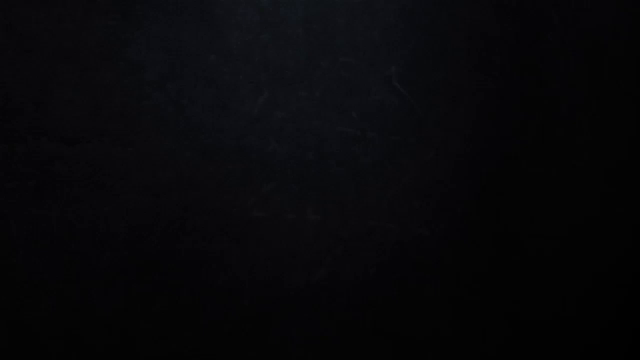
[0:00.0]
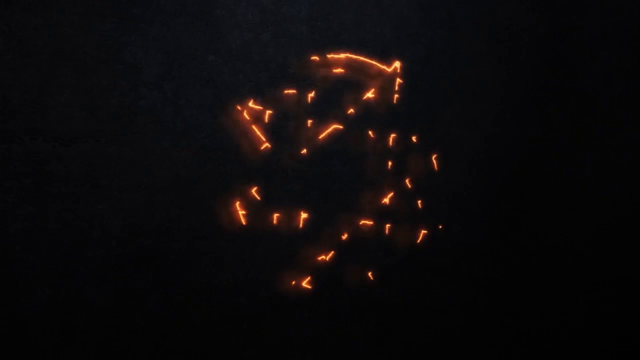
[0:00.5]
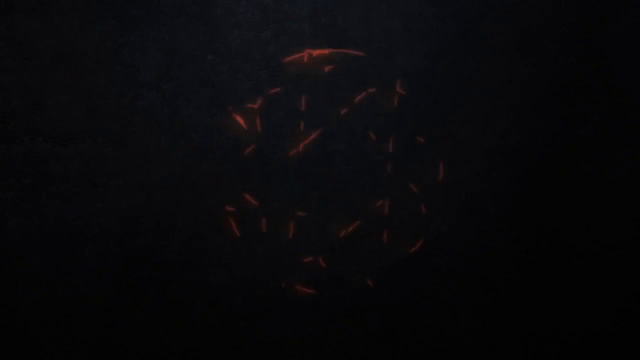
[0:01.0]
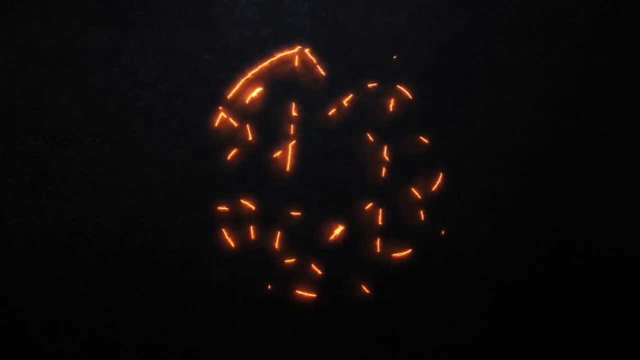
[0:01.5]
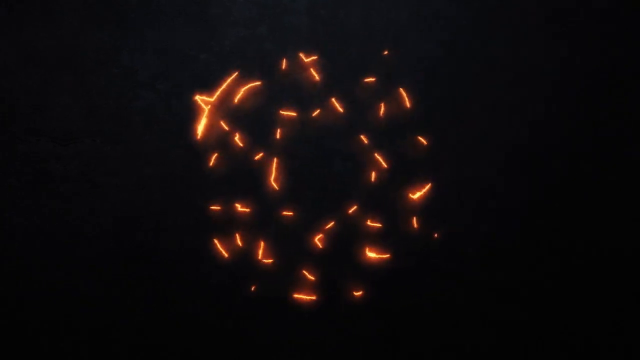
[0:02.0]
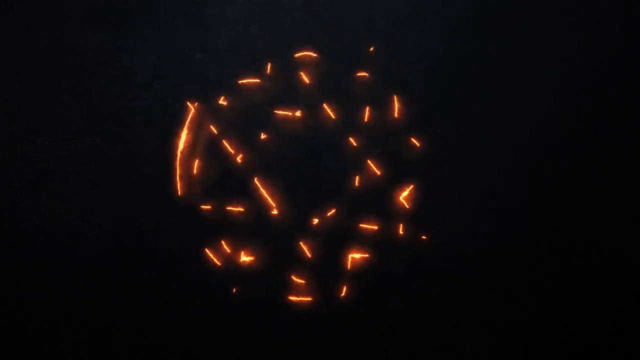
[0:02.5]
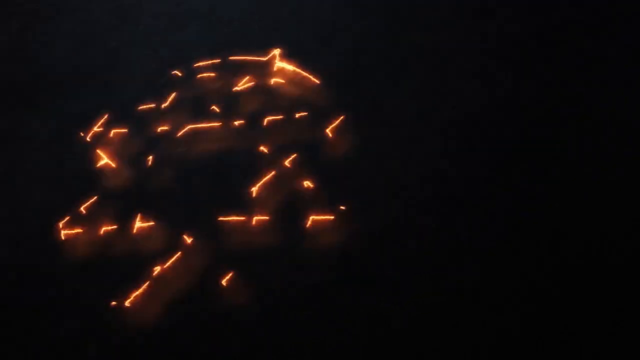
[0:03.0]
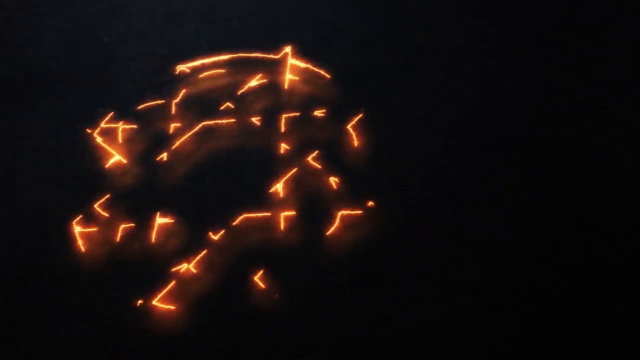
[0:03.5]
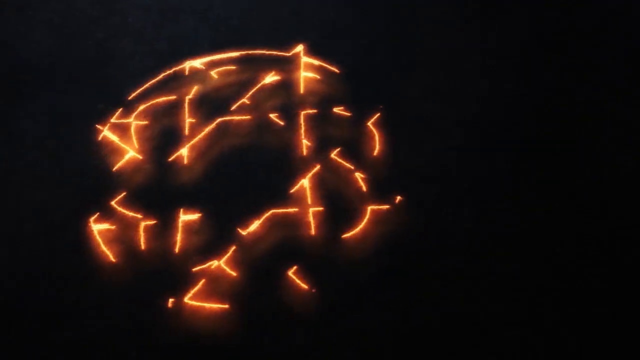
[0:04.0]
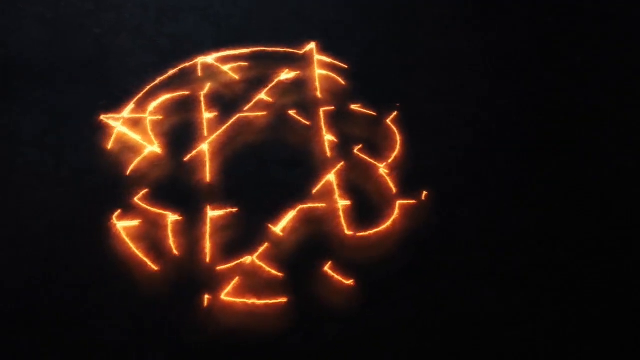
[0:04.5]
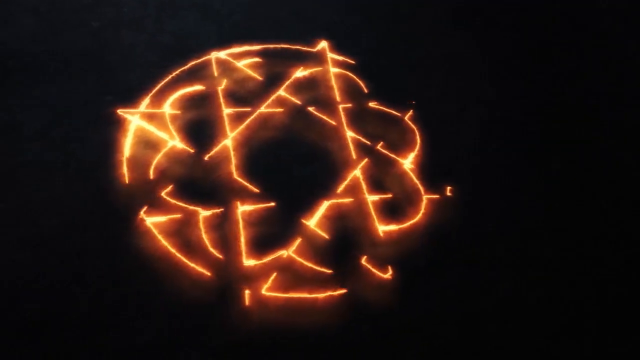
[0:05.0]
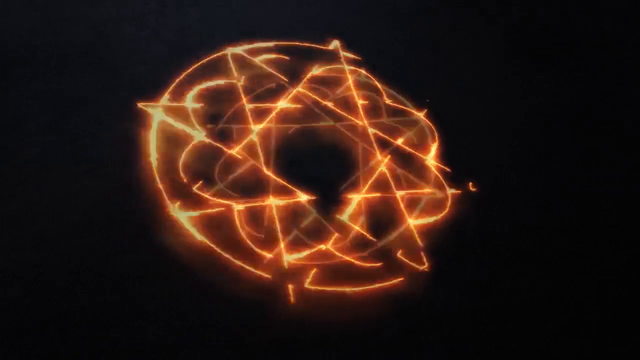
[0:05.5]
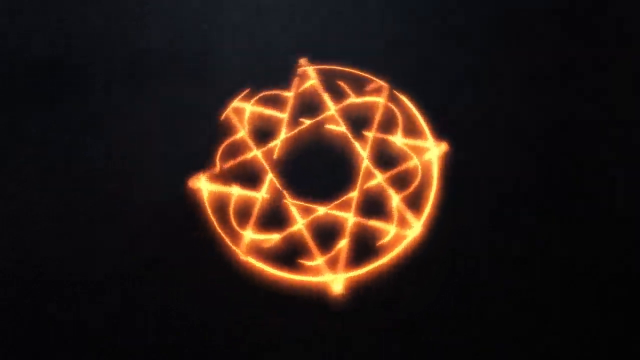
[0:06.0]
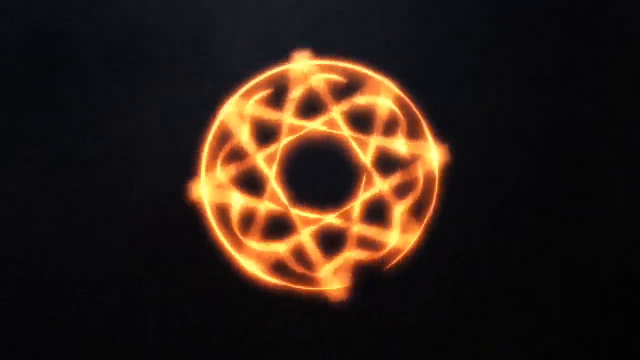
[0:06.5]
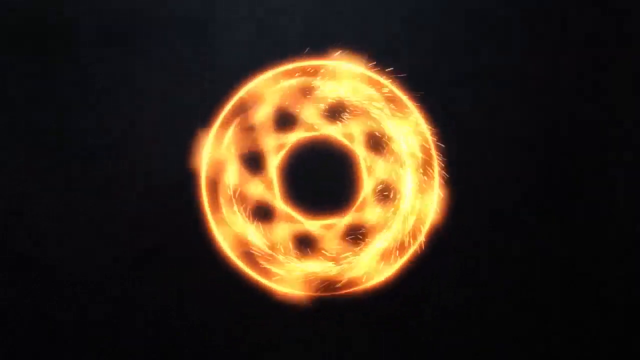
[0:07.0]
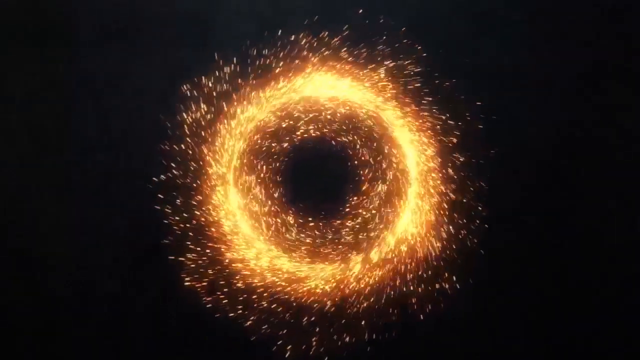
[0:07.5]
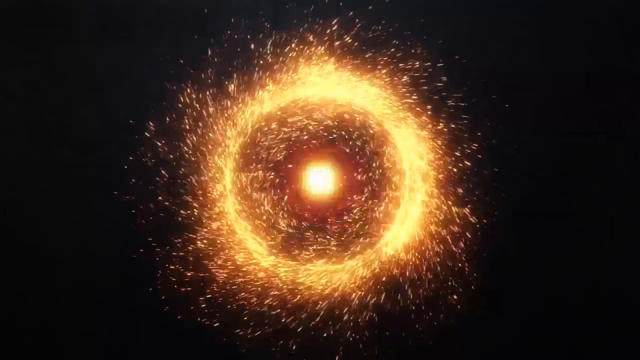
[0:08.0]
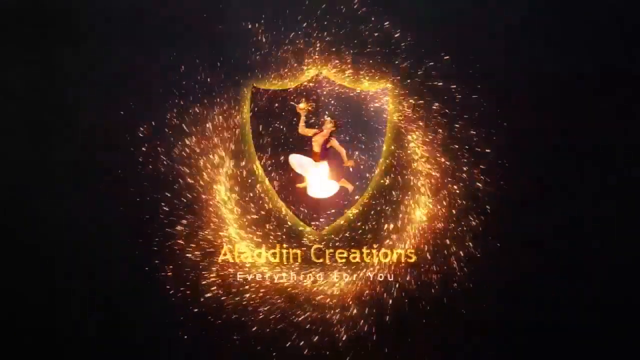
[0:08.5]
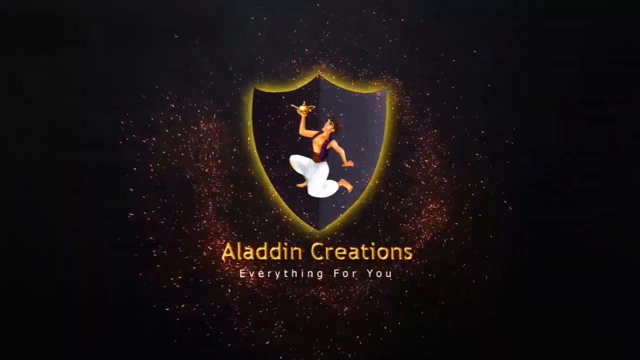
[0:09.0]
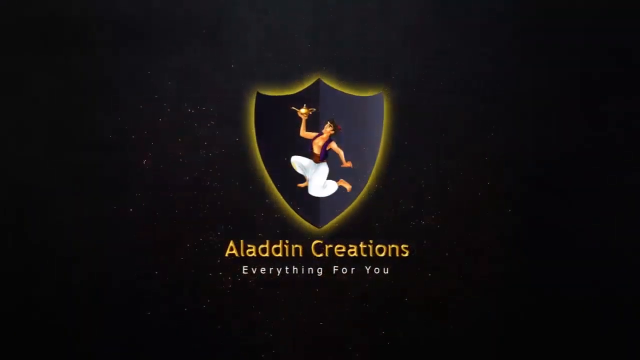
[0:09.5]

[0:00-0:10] Against a black background, orange lights slowly appear and begin forming some kind of star, which quickly starts spinning and seems to form a kind of portal. Suddenly a logo appears reading "Aladdin creations, everything for you", with some kind of shield showing the Disney character Aladdin at its center. He is holding some kind of lamp, the genie lamp, and wears his familiar clothes from the movie.